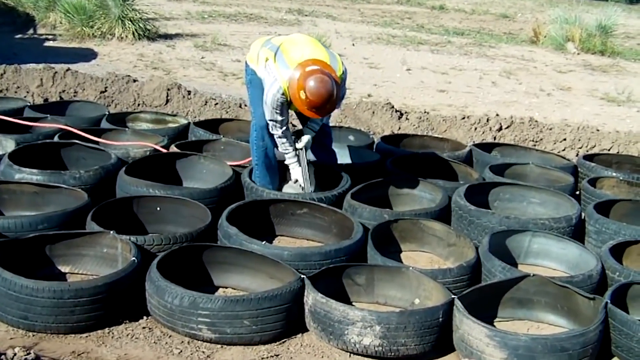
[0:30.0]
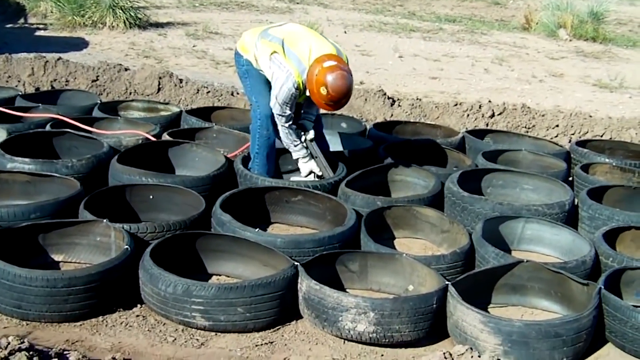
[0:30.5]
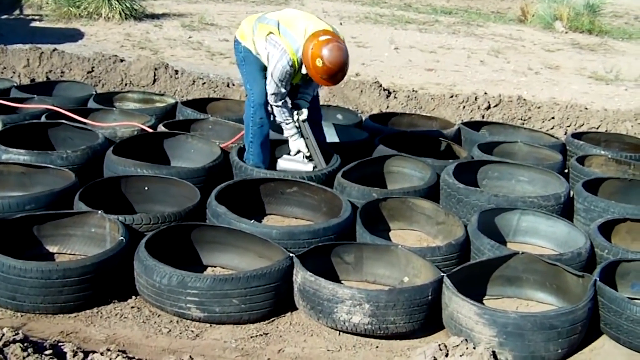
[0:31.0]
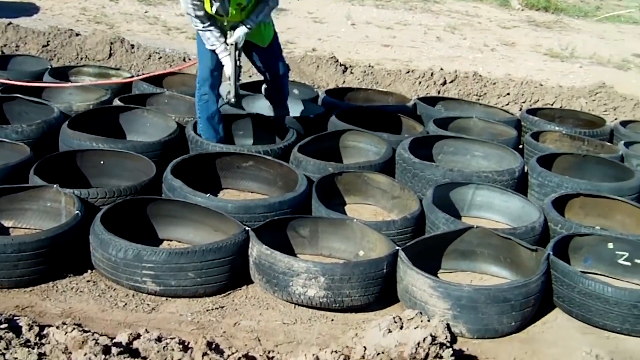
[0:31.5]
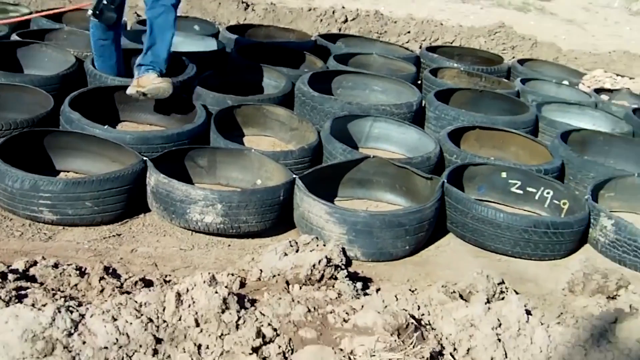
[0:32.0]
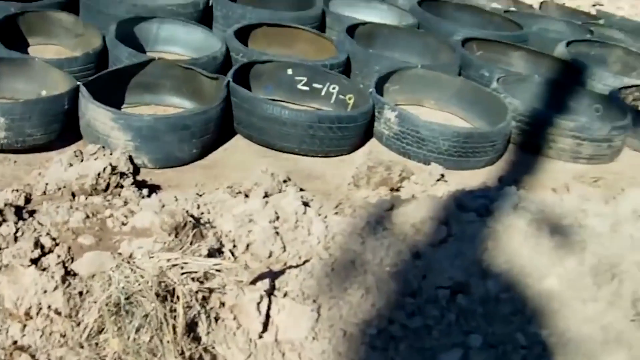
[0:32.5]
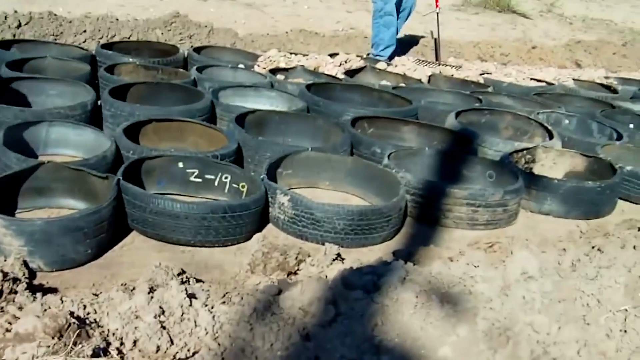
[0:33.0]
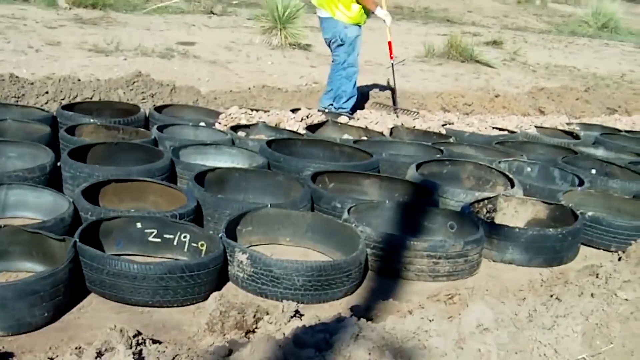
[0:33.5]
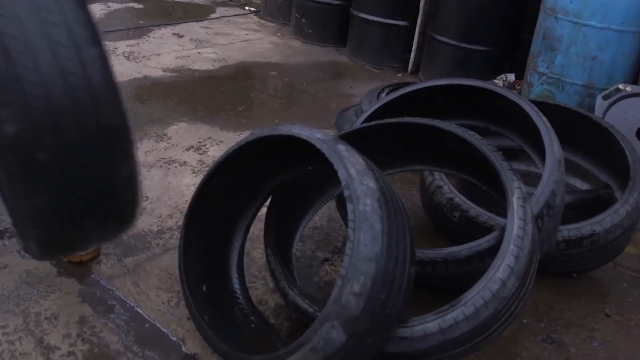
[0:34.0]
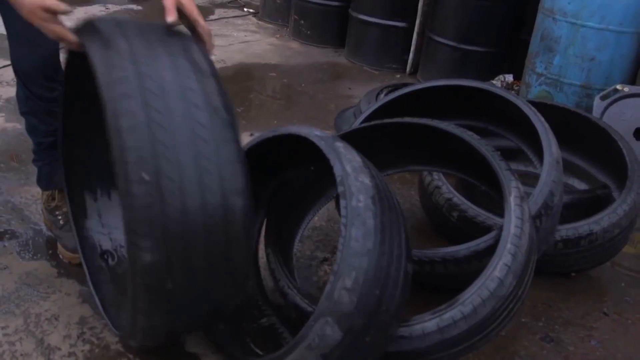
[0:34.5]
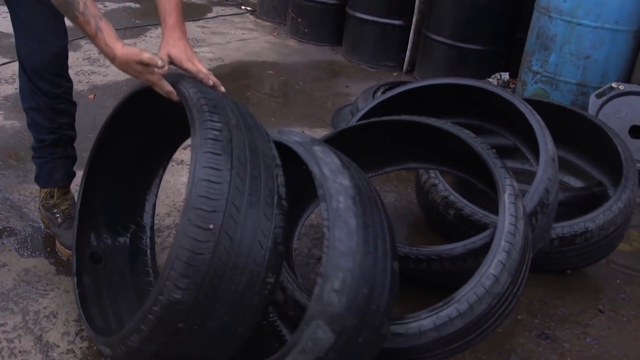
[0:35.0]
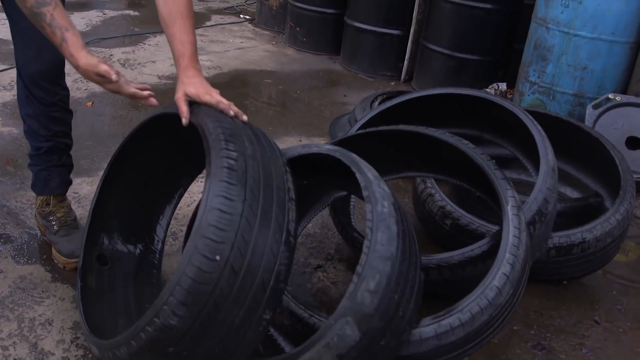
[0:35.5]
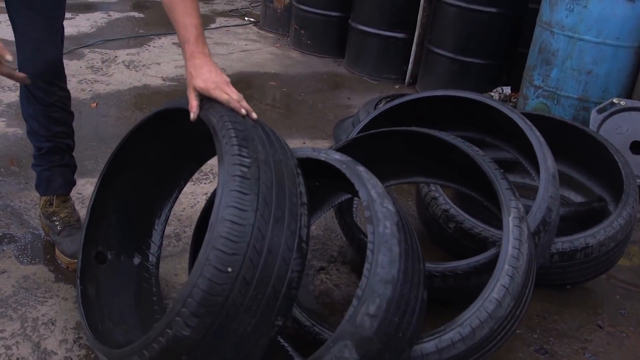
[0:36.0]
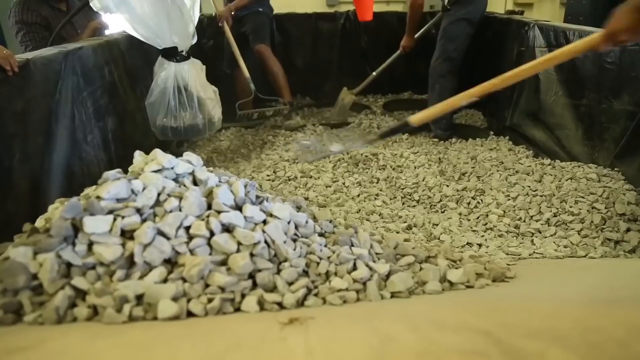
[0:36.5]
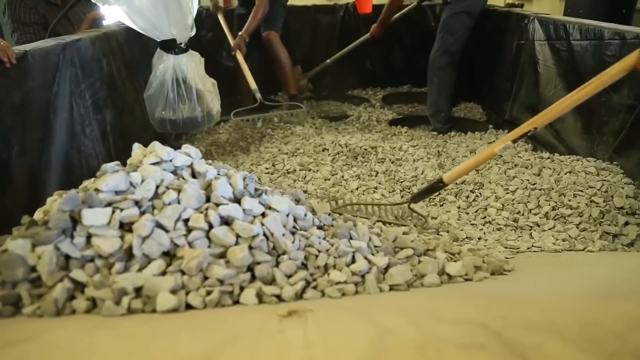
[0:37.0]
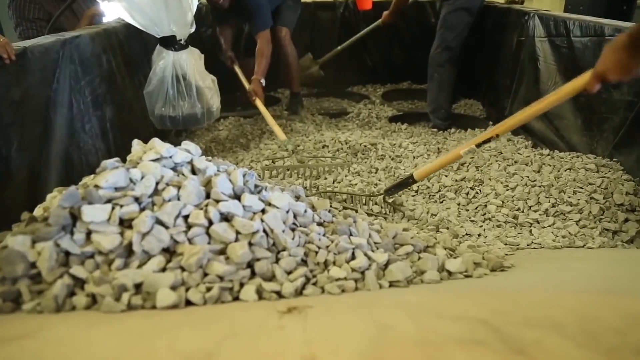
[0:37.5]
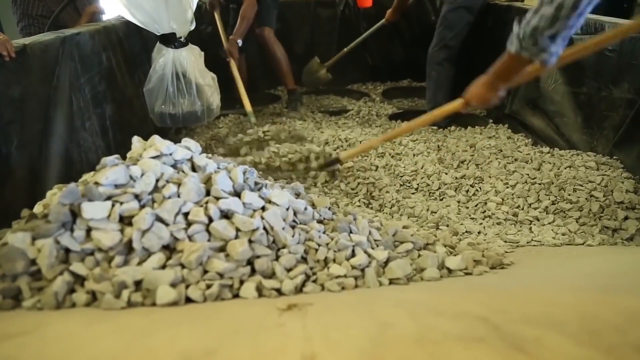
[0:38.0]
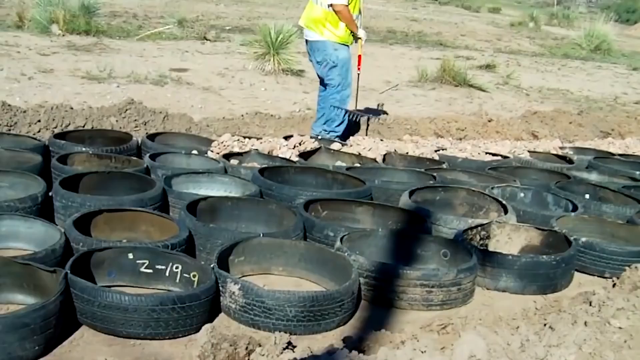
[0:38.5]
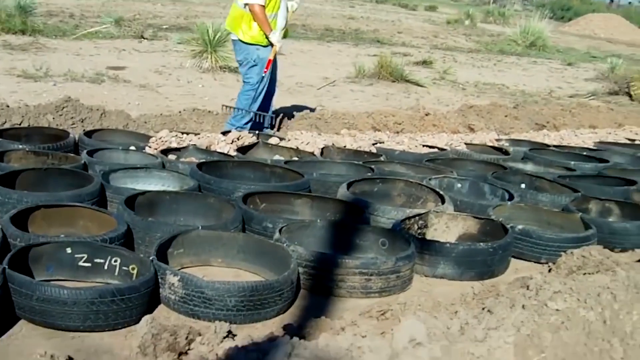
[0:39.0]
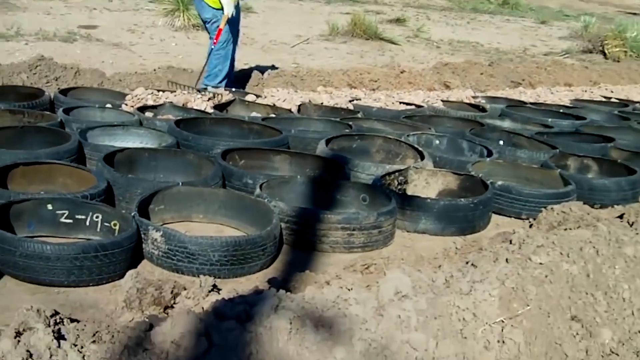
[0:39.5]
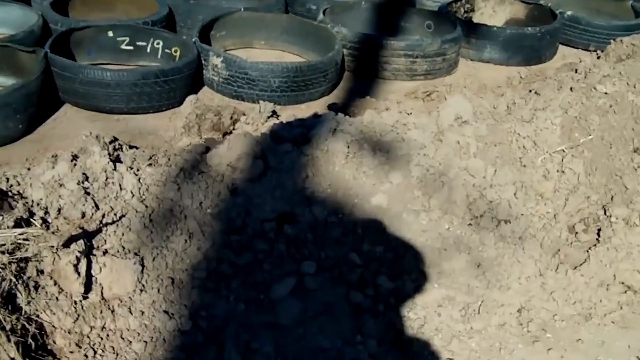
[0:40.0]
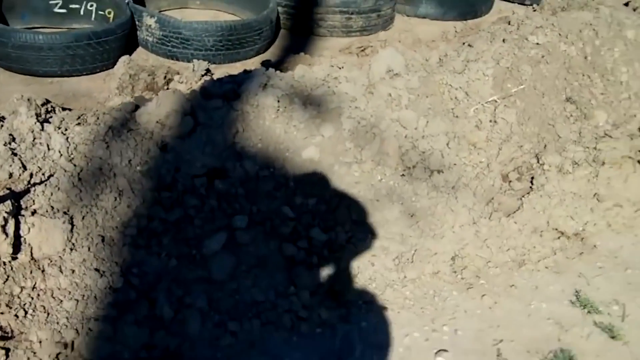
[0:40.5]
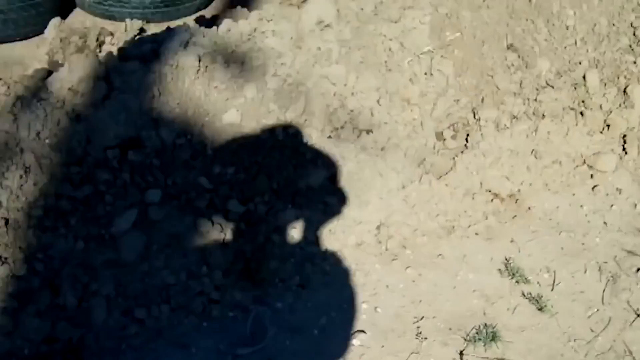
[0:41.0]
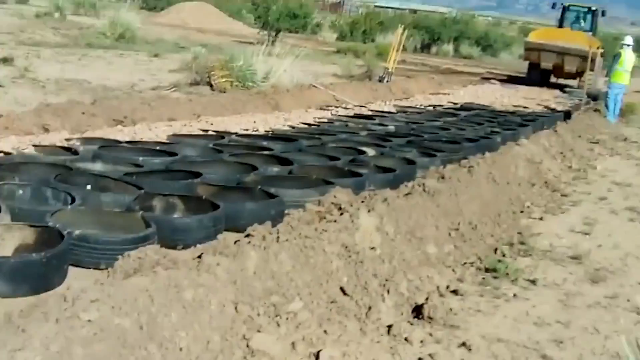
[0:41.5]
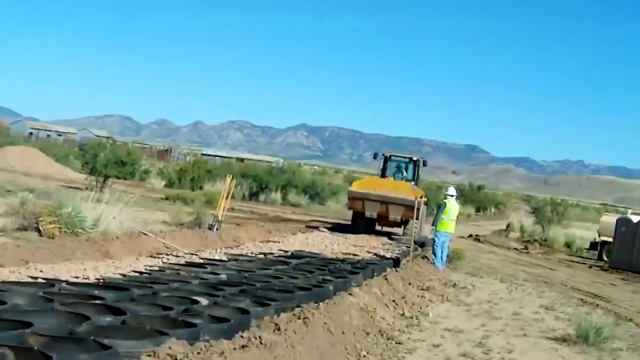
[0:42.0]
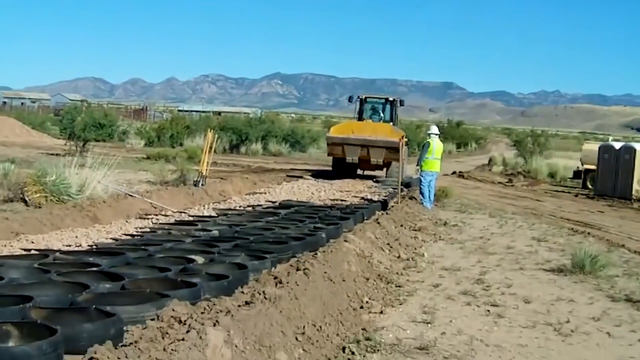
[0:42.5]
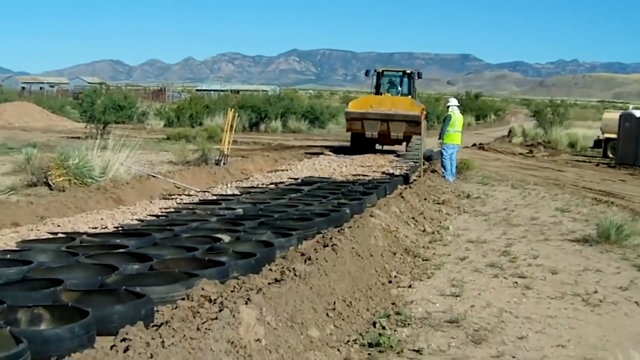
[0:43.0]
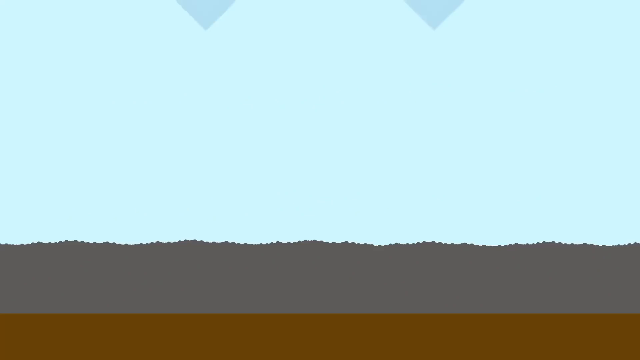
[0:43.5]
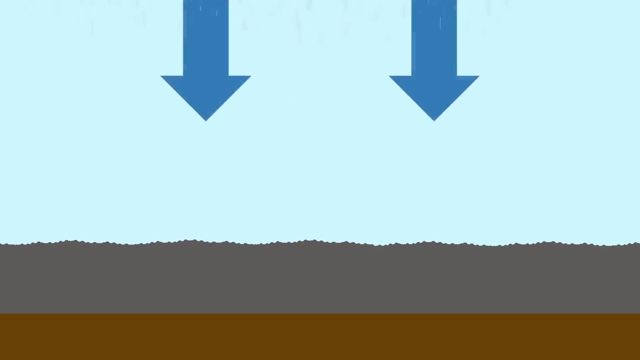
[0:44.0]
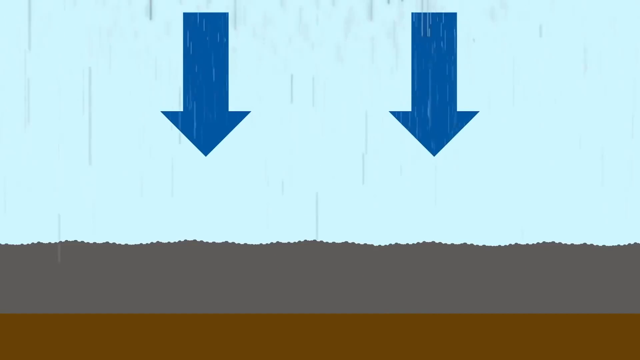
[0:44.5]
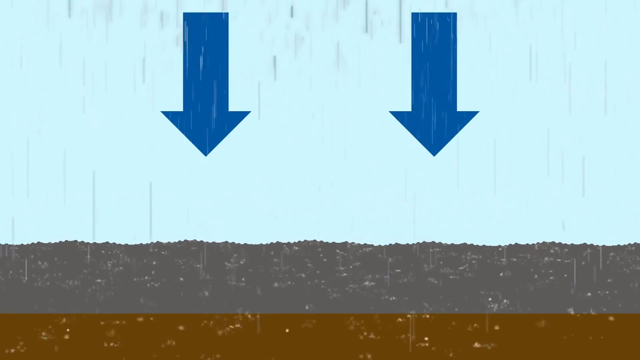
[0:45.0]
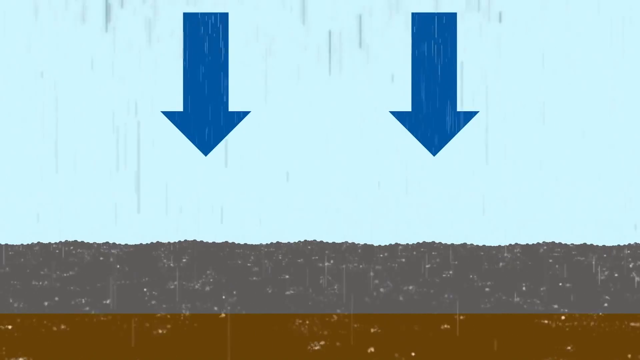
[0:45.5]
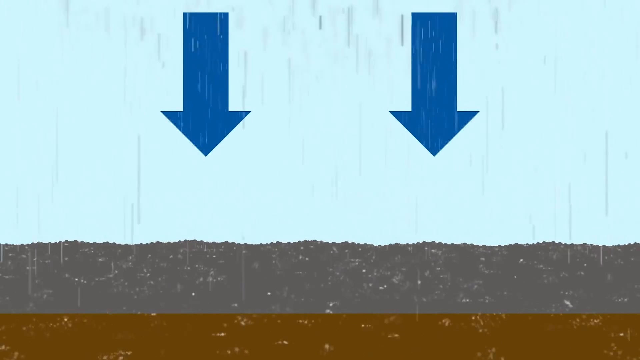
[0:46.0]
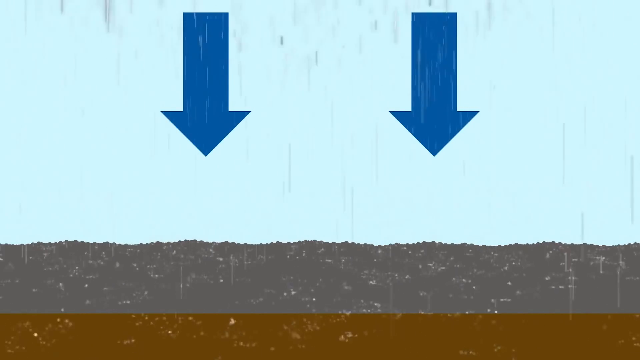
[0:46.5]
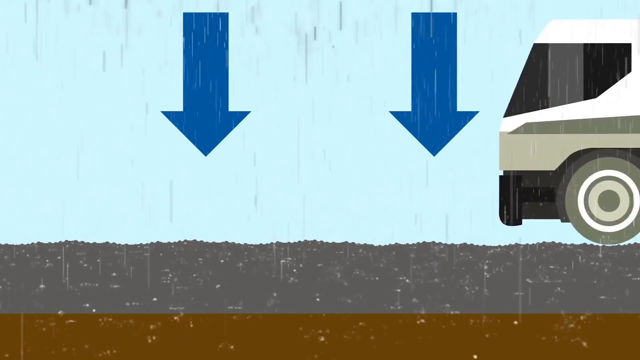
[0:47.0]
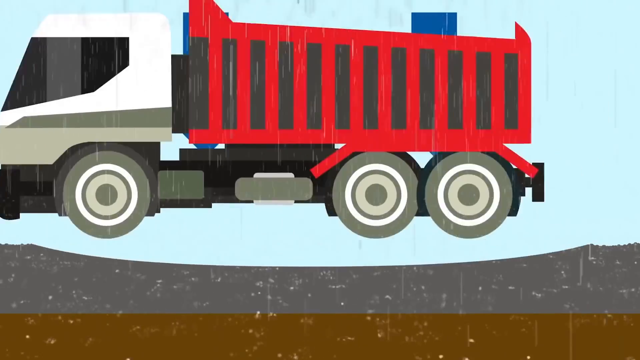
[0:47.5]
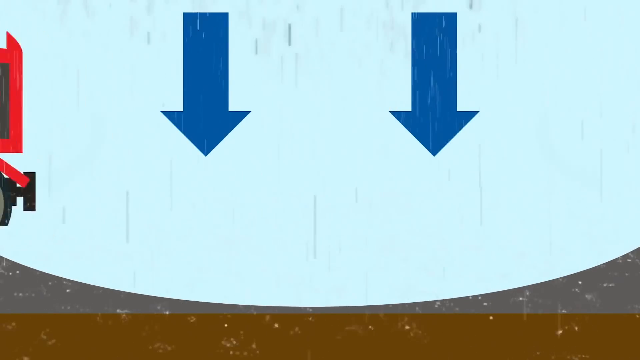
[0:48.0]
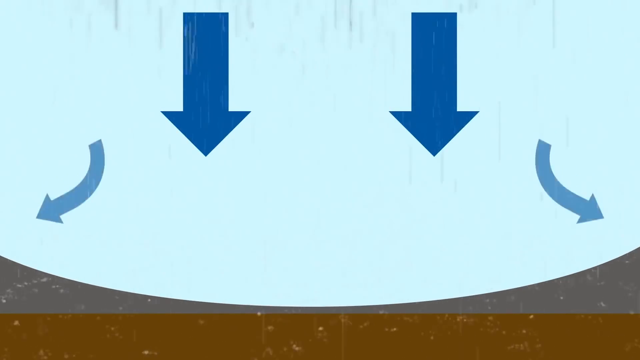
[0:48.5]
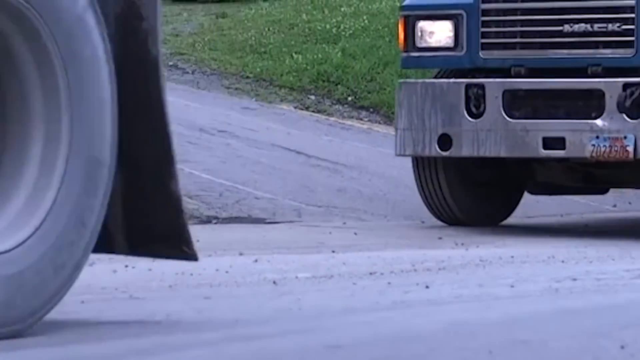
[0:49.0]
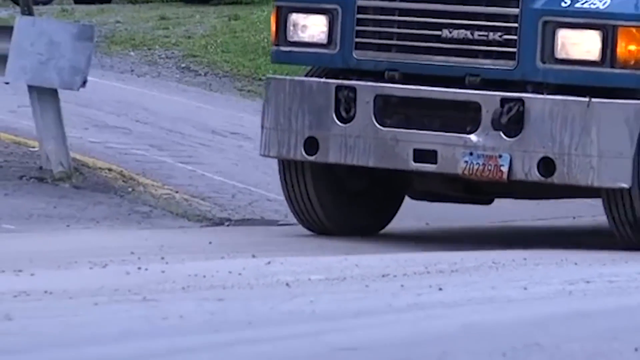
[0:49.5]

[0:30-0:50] The wheels lie on the ground as the man makes marks in them. For a few seconds, the inside of one wheel is shown with a marked date reading "2-19-9." The video returns to the area where the man was cutting wheels, and he lays wheels on the ground: four or five wheels are already resting either flat or diagonally on the ground, and he puts a freshly cut wheel down beside them on the left. Next, a group of people use shovels and scrapers to move rocks on the ground, a pile of white rocks sort of filling up a hole, possibly rocks smashed up by a machine for renovating the road.